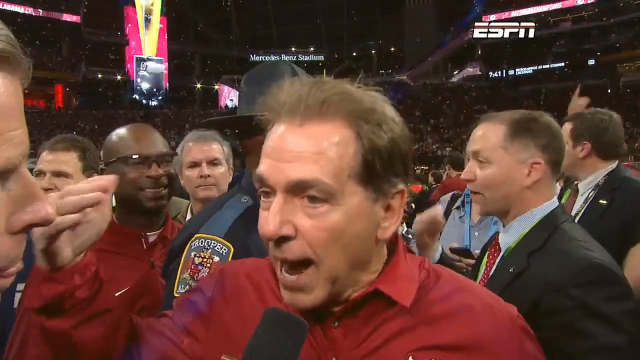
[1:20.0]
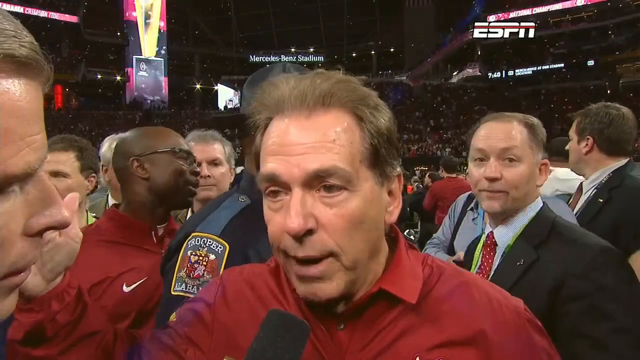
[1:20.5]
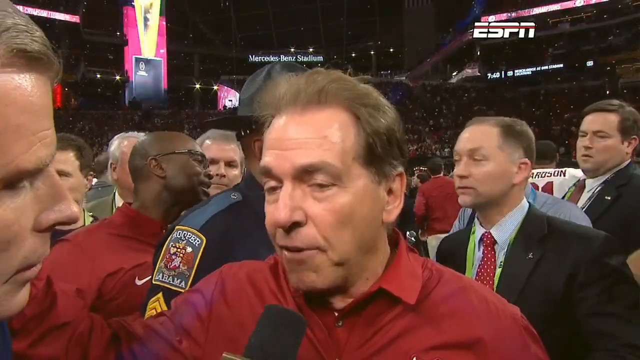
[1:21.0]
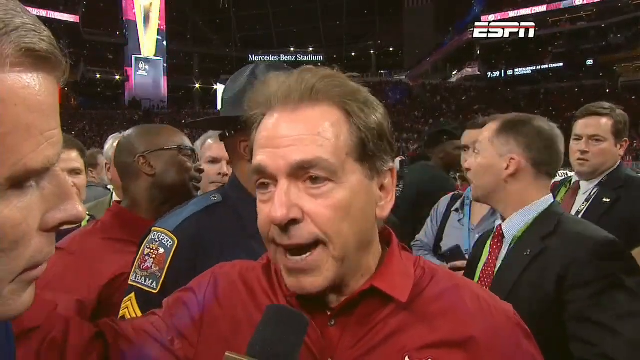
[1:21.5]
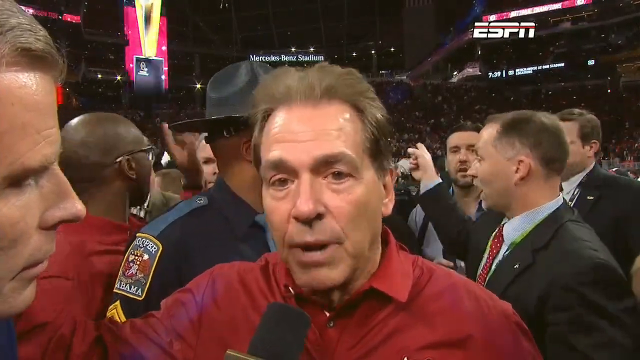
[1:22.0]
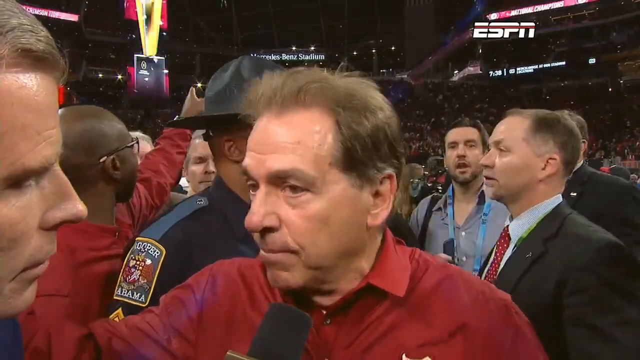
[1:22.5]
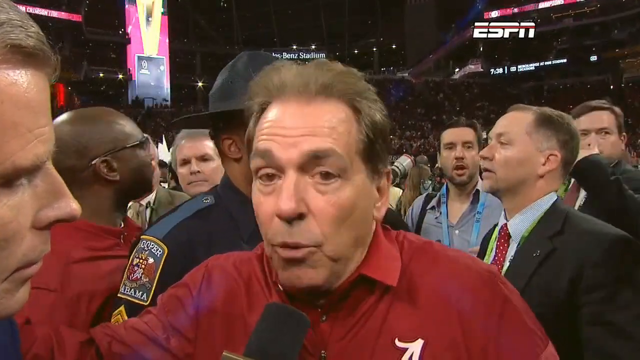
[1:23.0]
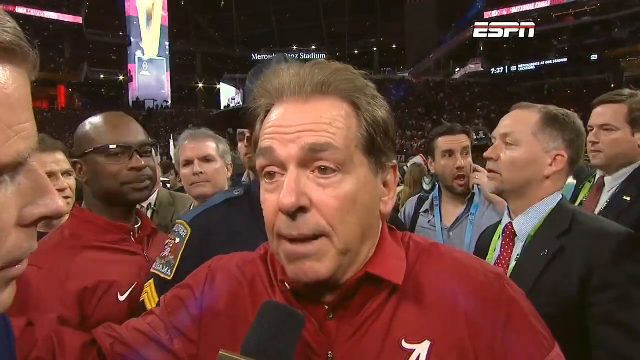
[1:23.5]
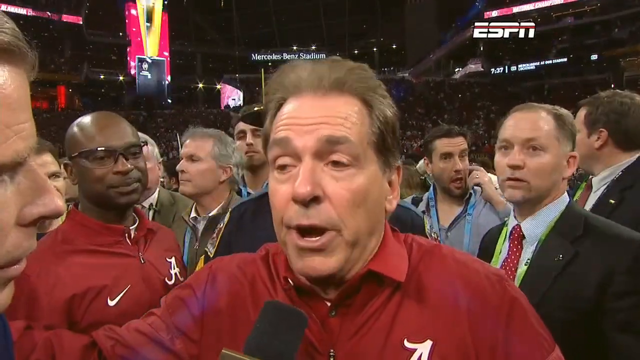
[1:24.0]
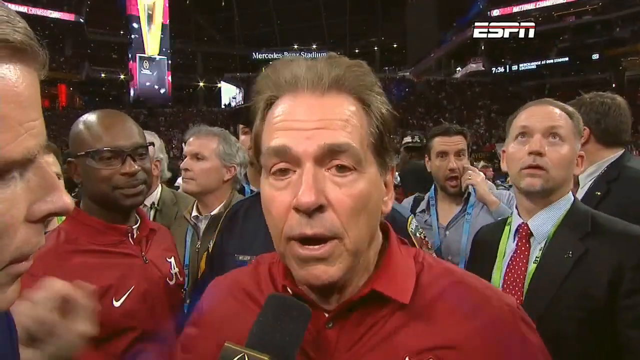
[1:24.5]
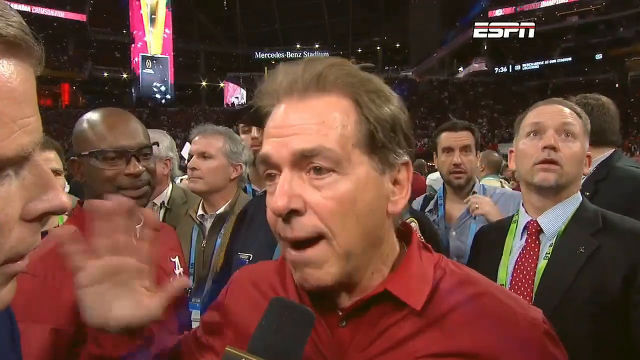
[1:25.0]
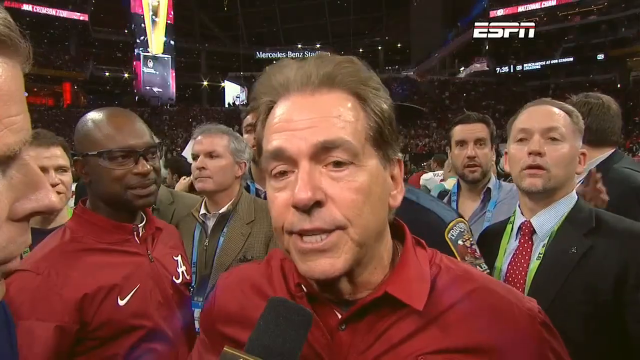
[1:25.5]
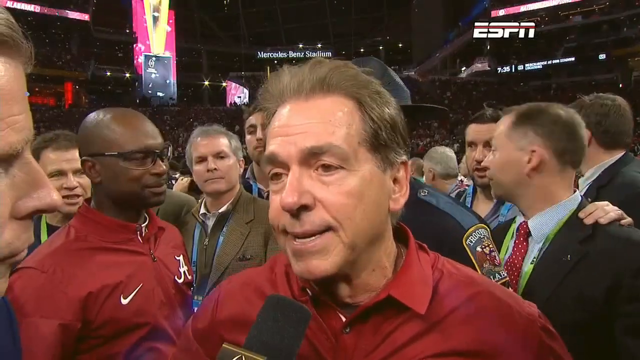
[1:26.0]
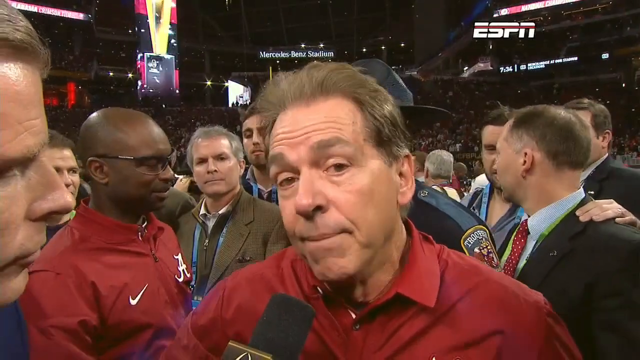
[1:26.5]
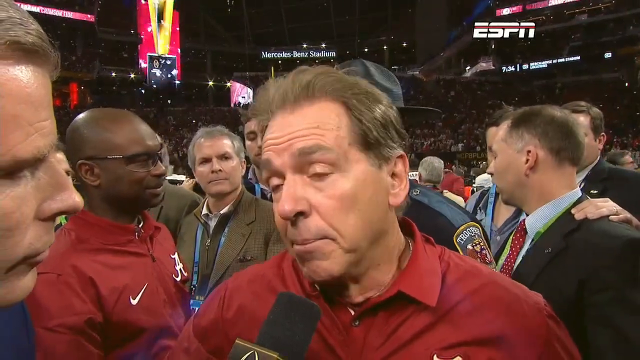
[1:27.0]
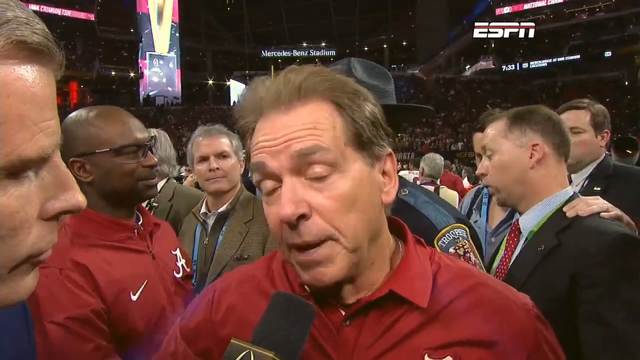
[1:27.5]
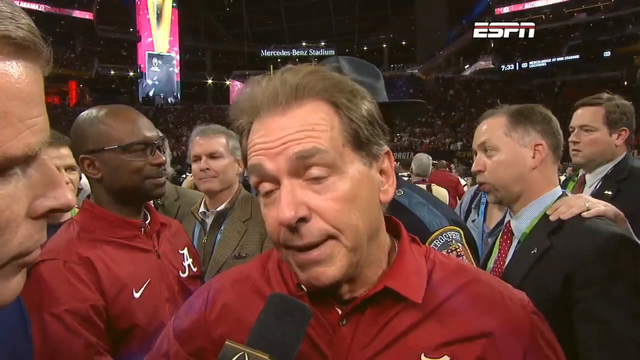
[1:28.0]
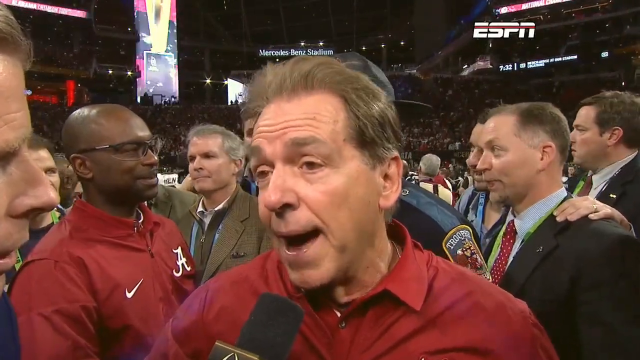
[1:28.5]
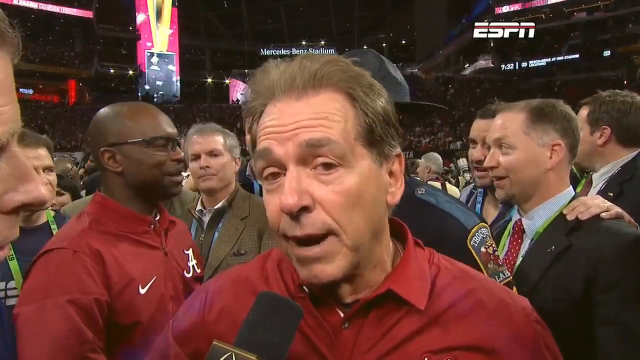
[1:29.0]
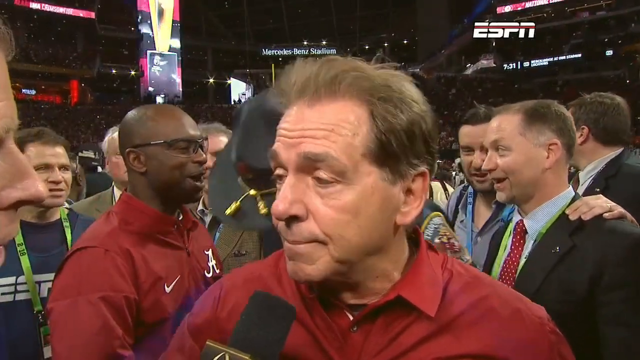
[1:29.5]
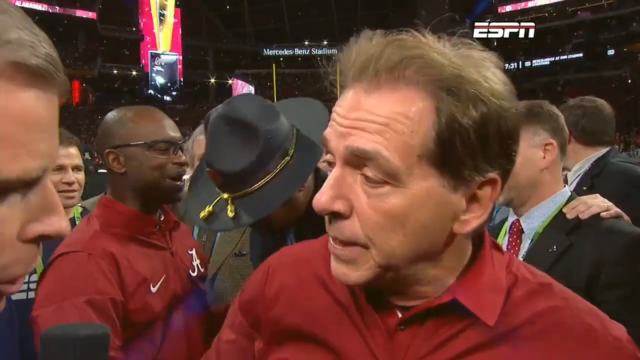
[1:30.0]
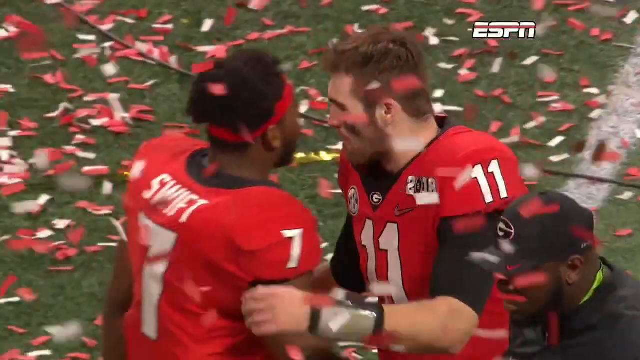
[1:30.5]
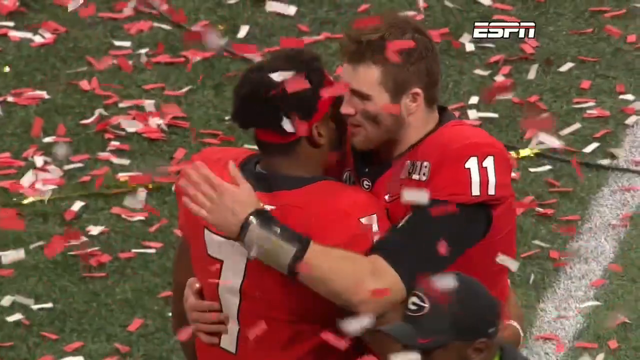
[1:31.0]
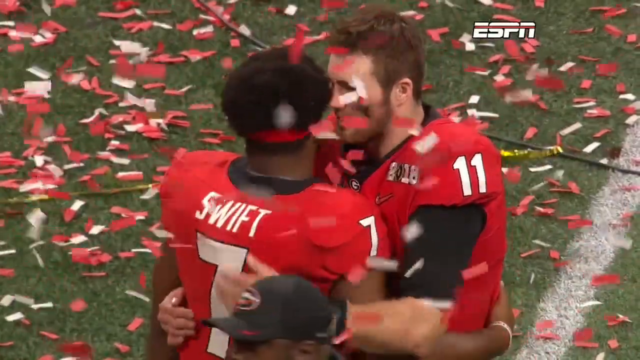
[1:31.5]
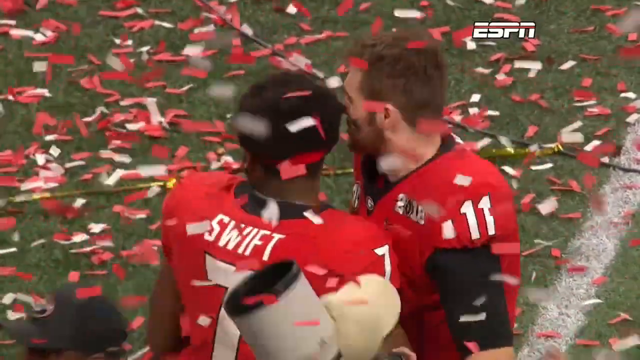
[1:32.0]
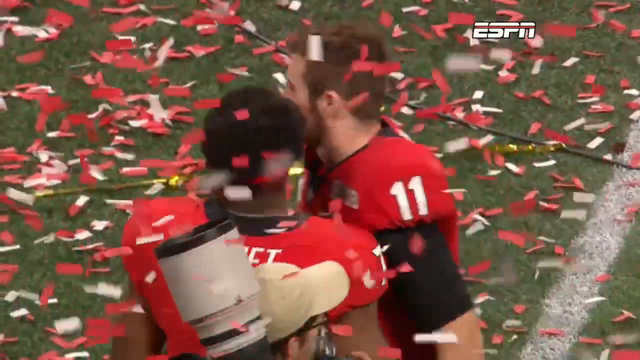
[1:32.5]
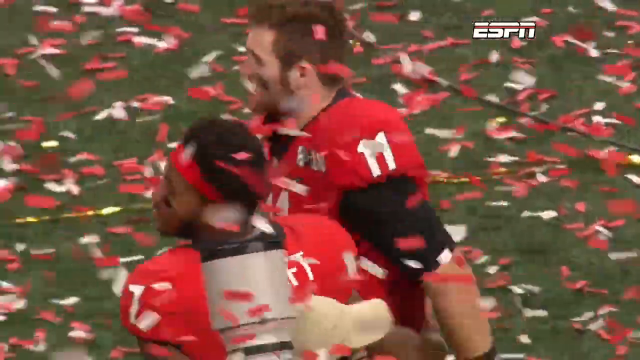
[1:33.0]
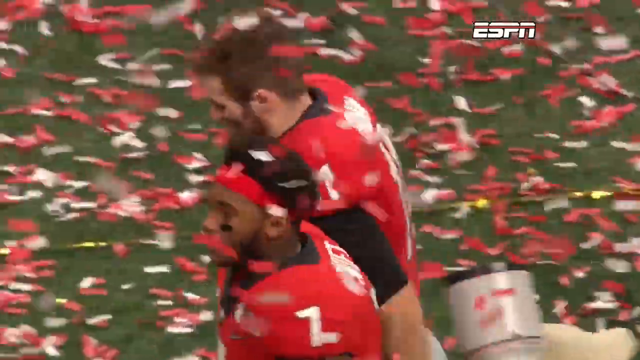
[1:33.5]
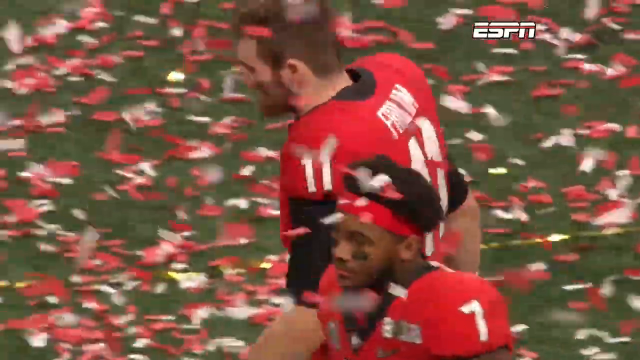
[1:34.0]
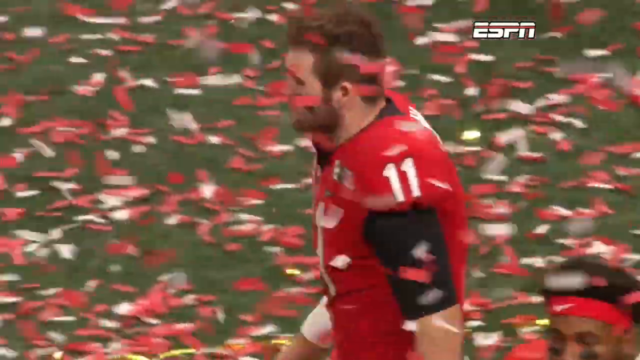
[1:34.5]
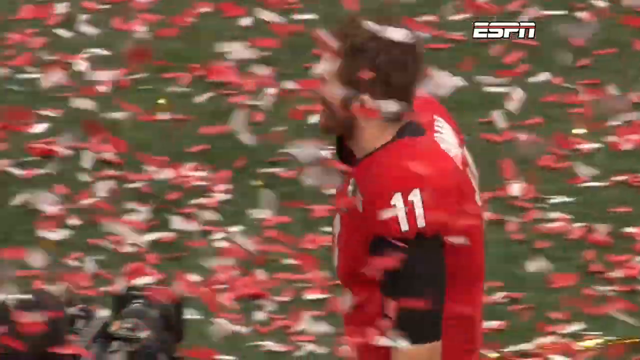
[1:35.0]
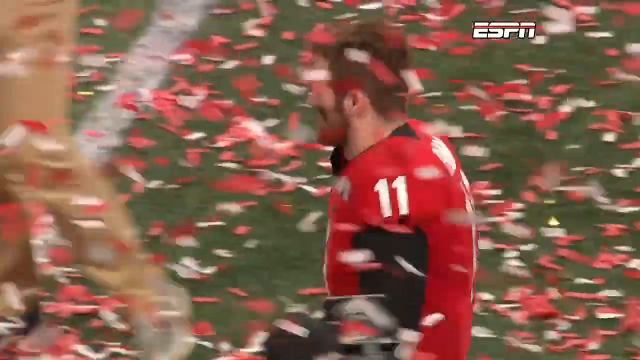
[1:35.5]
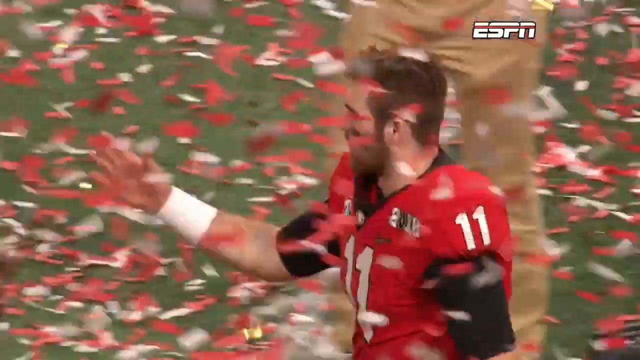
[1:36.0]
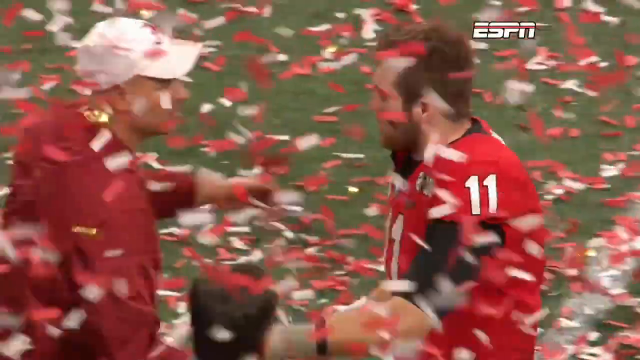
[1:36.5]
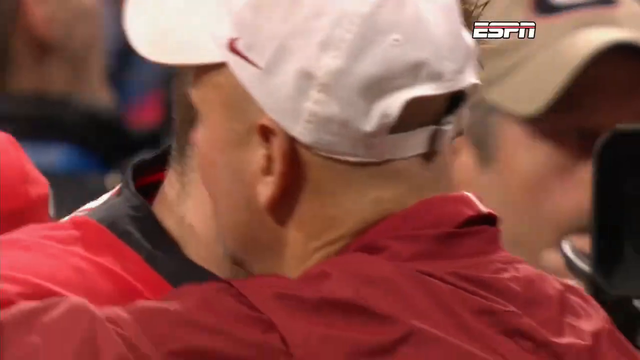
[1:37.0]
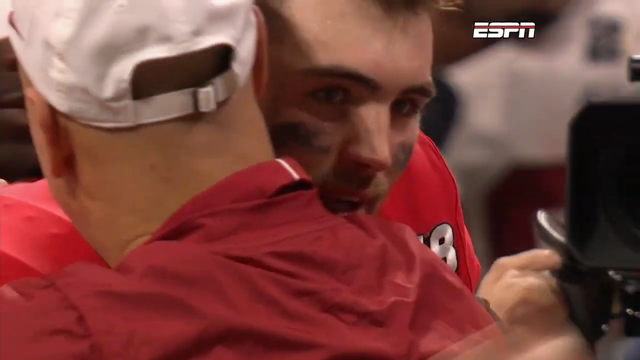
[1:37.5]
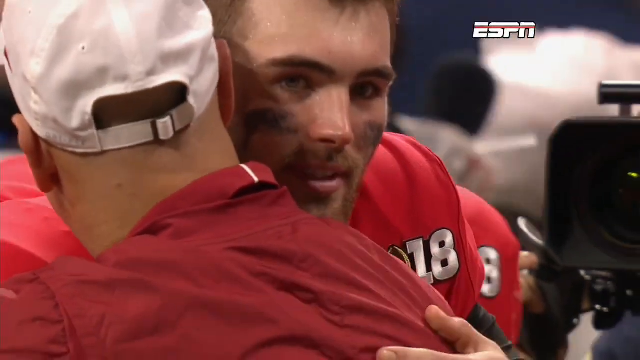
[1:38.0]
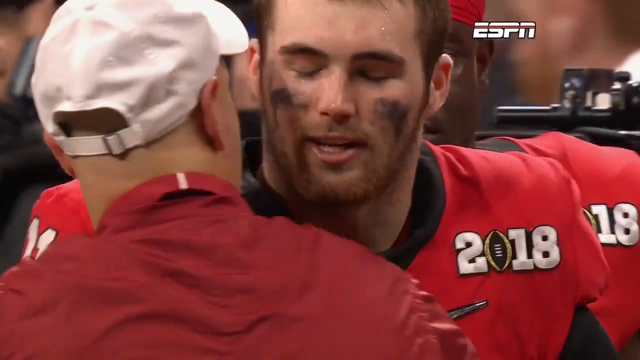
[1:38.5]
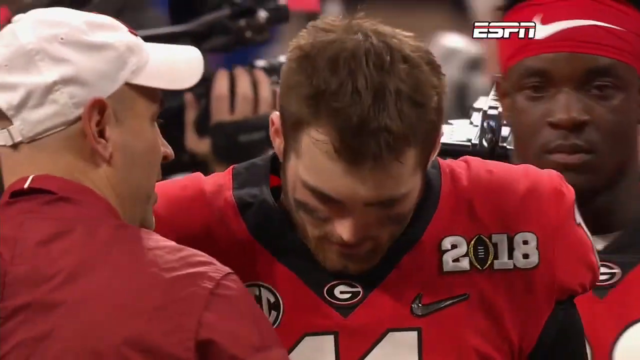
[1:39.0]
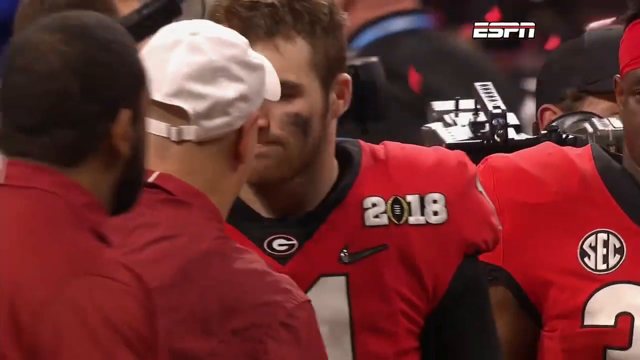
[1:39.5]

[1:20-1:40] The interview between Alabama coach Nick Saban and the ESPN commentator quickly cuts to Georgia players, apparently including Georgia's quarterback. The year 2018 is visible on the players' jerseys. The players are supporting and congratulating each other. Red and white confetti is still around, and many people are behind the individuals in the foreground. It is dark out, and everyone shown is still on the field. Coach Saban seems confident and excited.